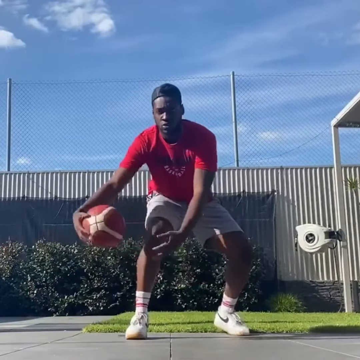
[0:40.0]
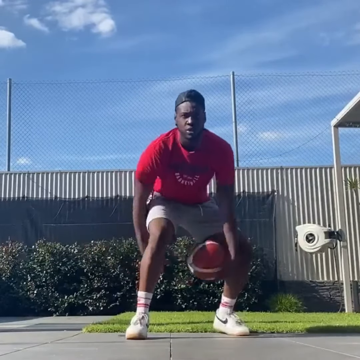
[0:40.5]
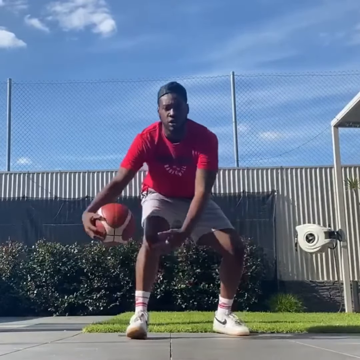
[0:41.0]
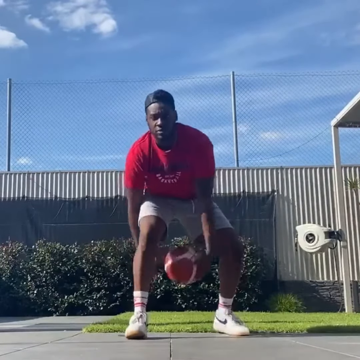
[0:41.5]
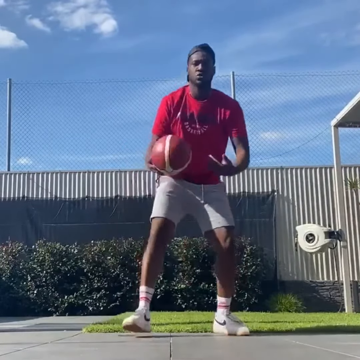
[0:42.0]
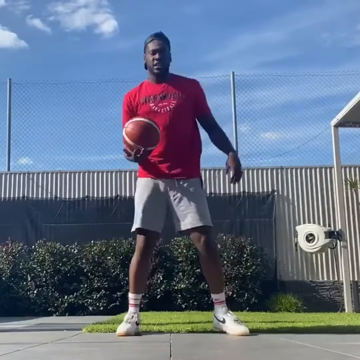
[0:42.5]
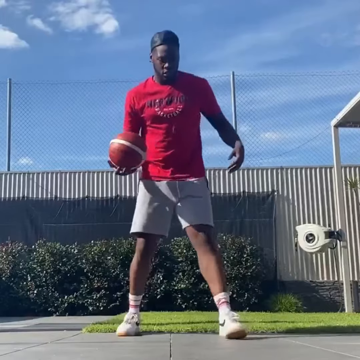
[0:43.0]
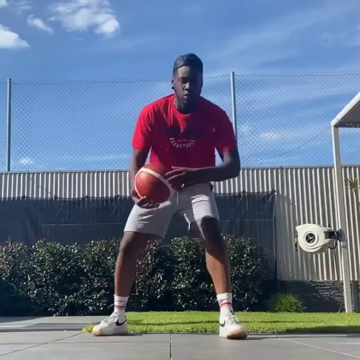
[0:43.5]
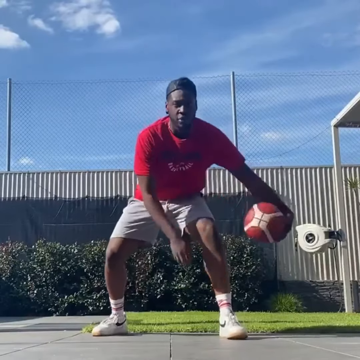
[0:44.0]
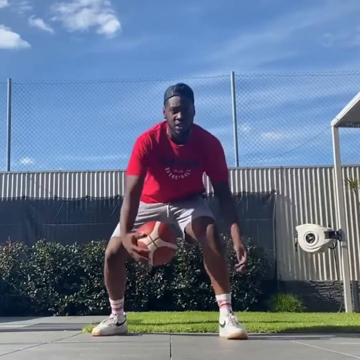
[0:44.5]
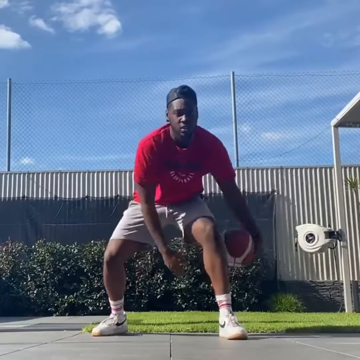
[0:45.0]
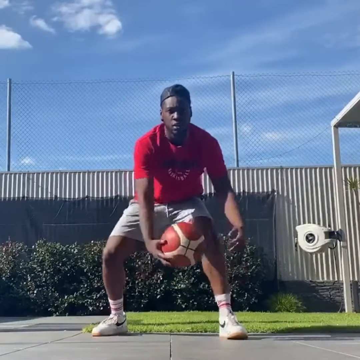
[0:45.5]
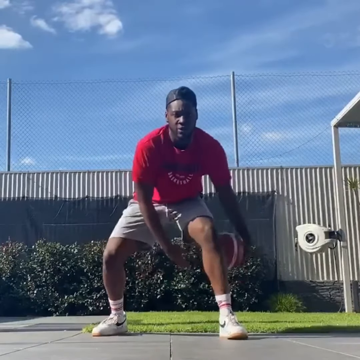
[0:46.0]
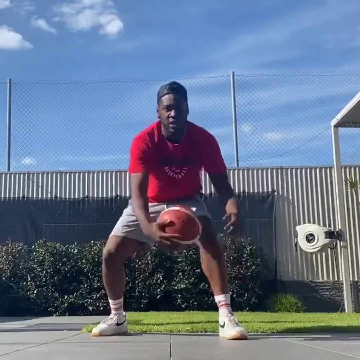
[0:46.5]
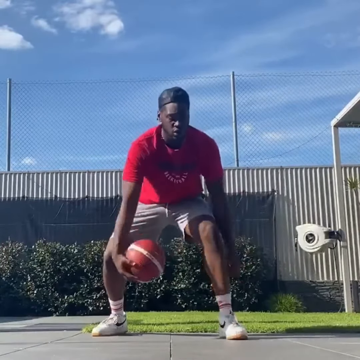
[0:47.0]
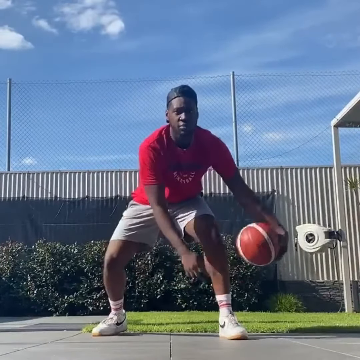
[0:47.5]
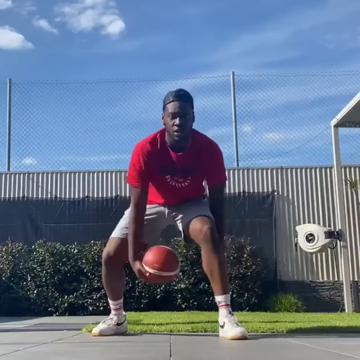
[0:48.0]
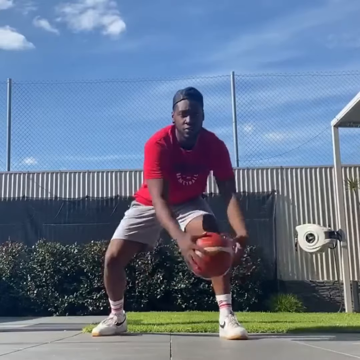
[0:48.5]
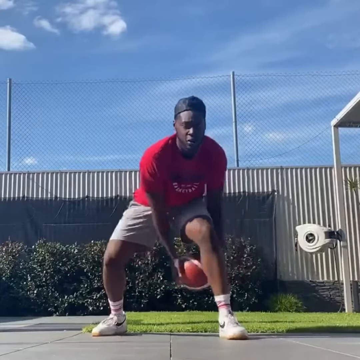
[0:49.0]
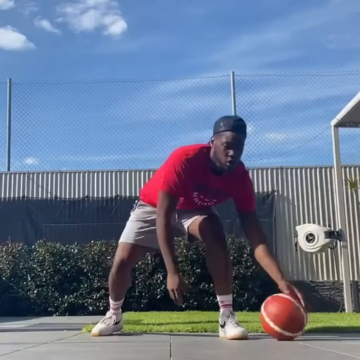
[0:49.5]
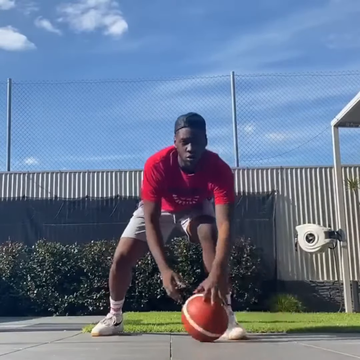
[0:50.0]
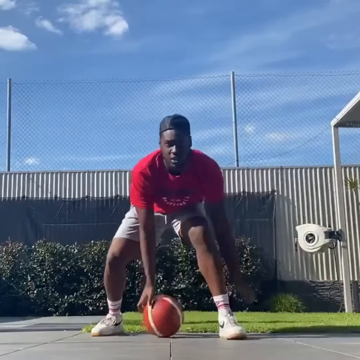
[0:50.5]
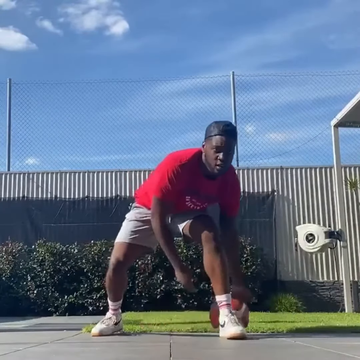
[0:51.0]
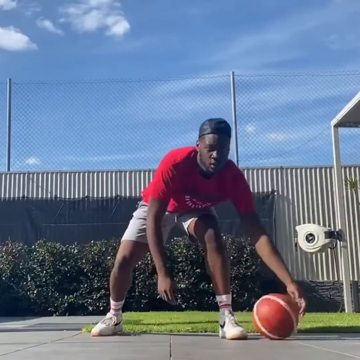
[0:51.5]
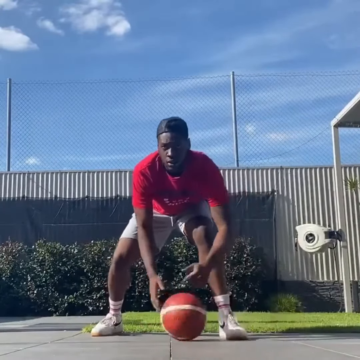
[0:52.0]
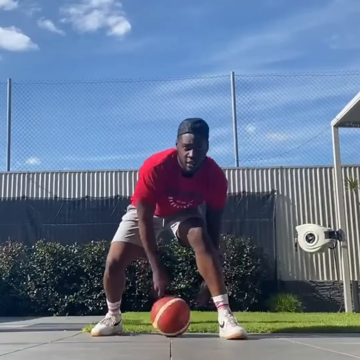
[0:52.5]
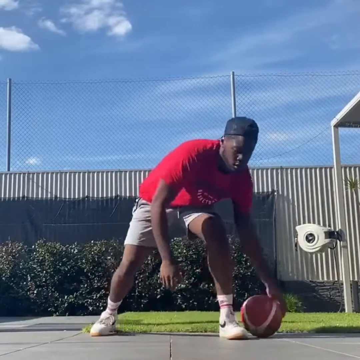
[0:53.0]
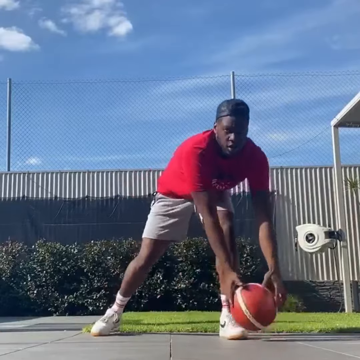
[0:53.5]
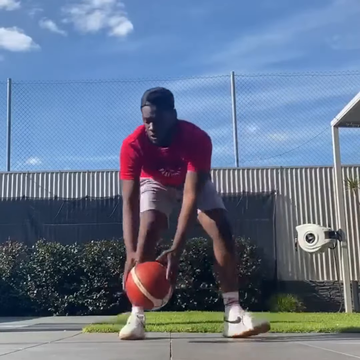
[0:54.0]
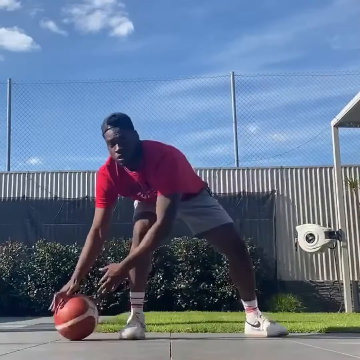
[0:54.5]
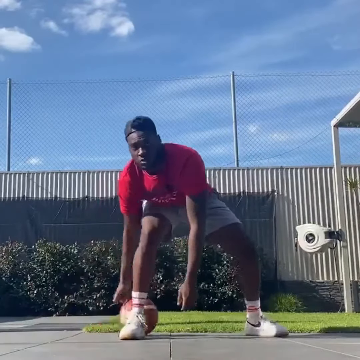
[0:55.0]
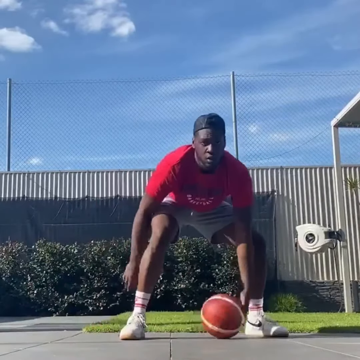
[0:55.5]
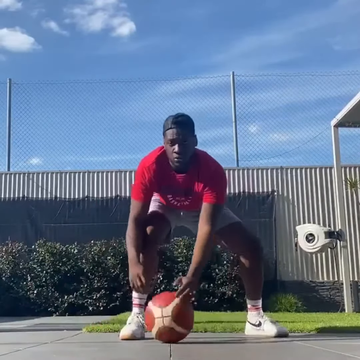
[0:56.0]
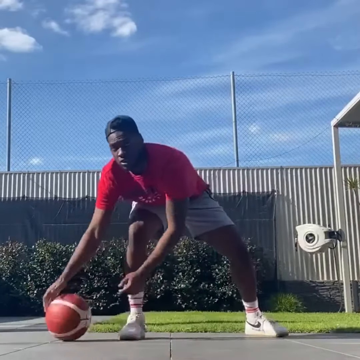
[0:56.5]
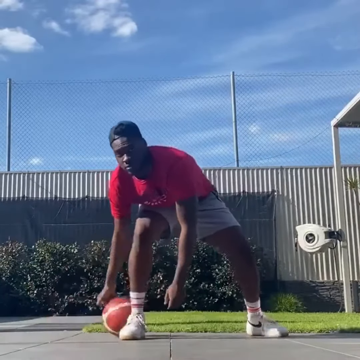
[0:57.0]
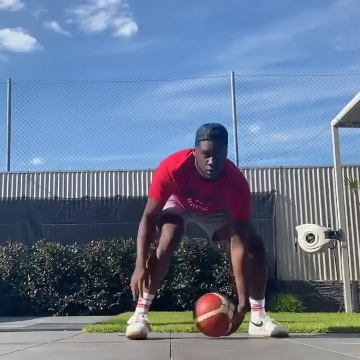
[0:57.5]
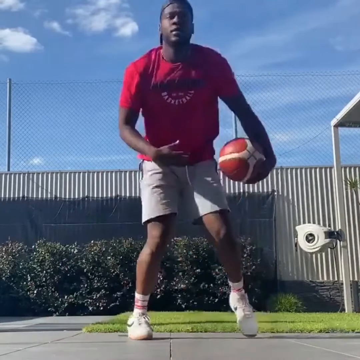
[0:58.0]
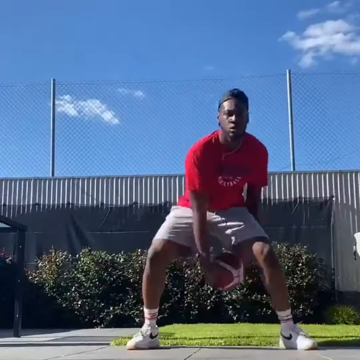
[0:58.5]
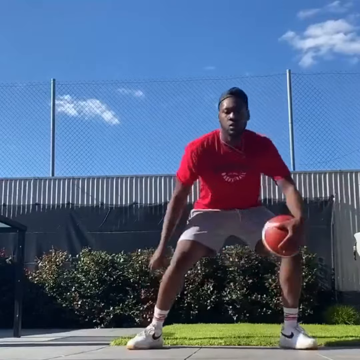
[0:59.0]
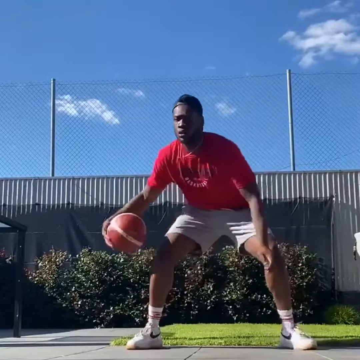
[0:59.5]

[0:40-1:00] The instructor now passes the basketball between his legs without dribbling it, using only his hands, going from his right hand to his left hand, coming up through the front and out the back, then from the back to the front. Later he places the ball on the ground and rolls it between his legs in the same motion he would use to dribble it, still not dribbling. He switches from his left leg to his right leg so he works around each leg.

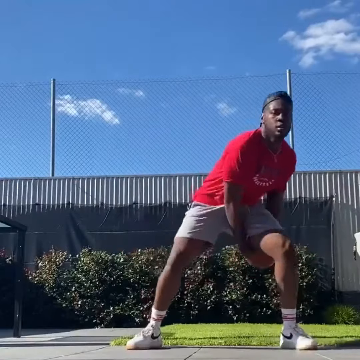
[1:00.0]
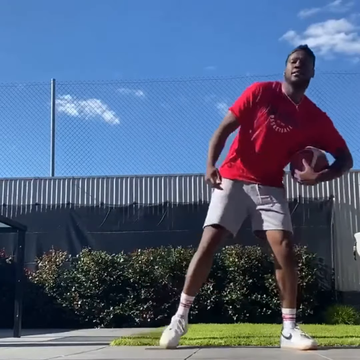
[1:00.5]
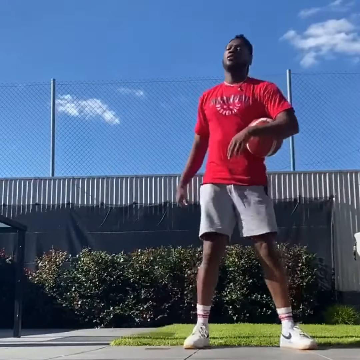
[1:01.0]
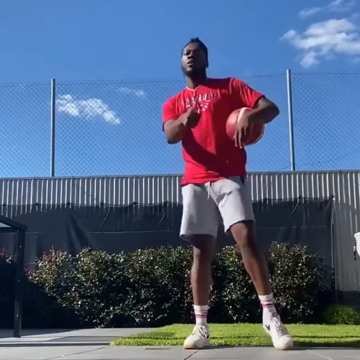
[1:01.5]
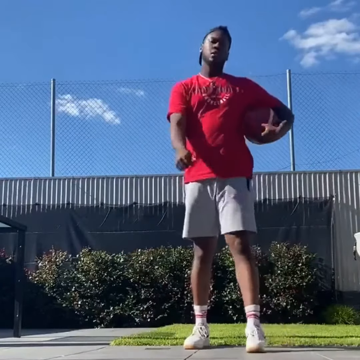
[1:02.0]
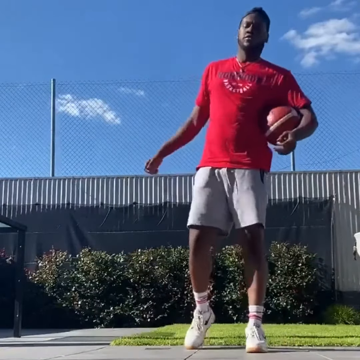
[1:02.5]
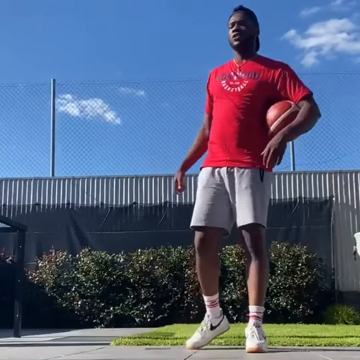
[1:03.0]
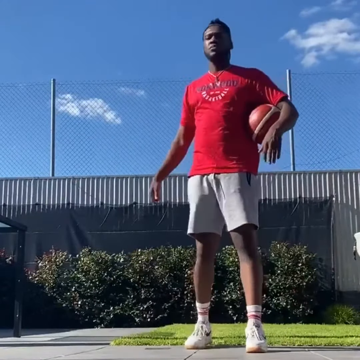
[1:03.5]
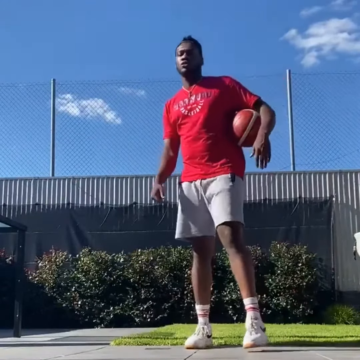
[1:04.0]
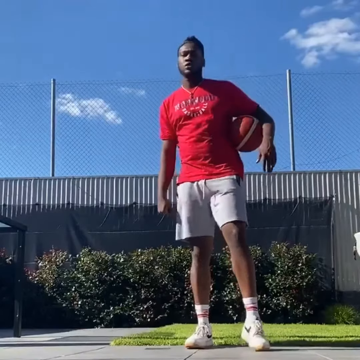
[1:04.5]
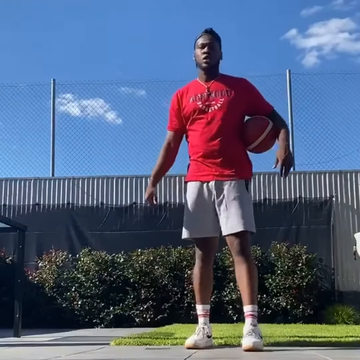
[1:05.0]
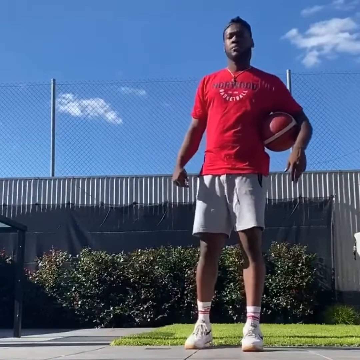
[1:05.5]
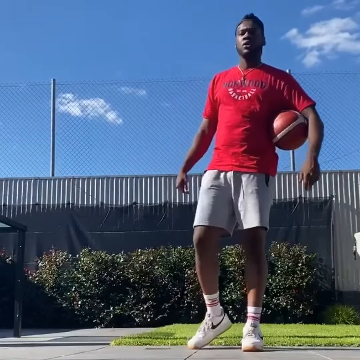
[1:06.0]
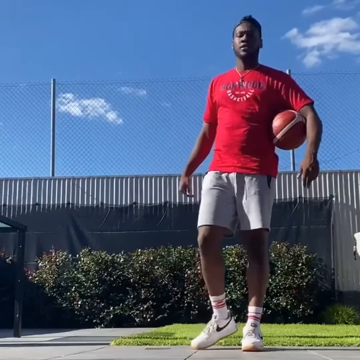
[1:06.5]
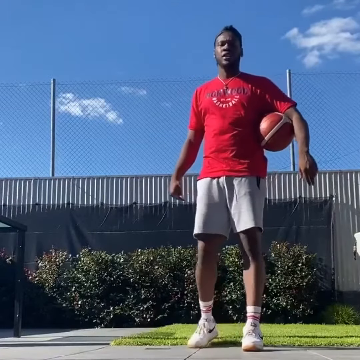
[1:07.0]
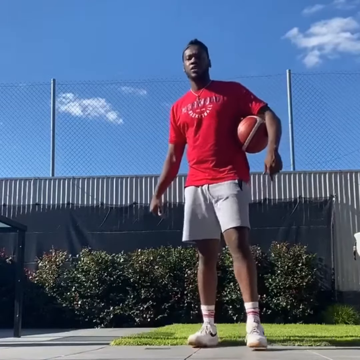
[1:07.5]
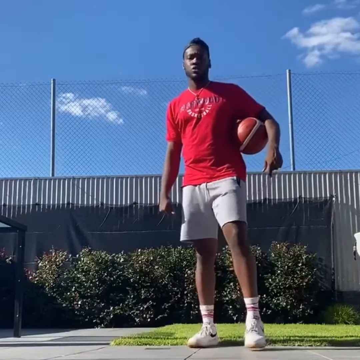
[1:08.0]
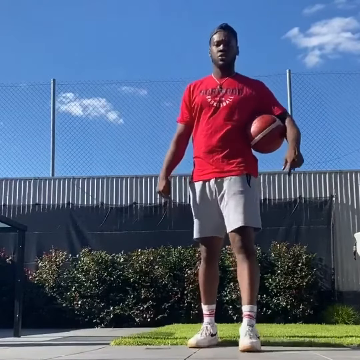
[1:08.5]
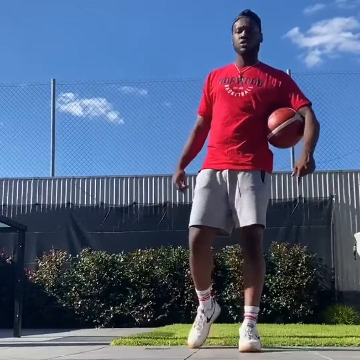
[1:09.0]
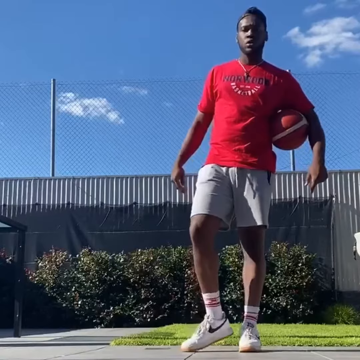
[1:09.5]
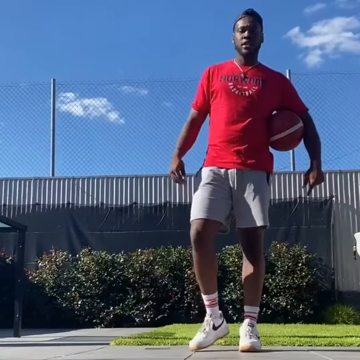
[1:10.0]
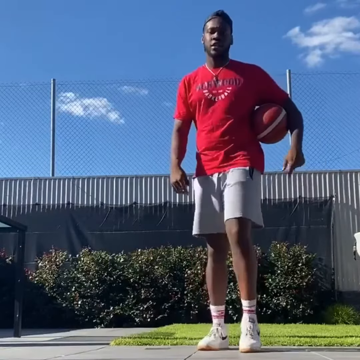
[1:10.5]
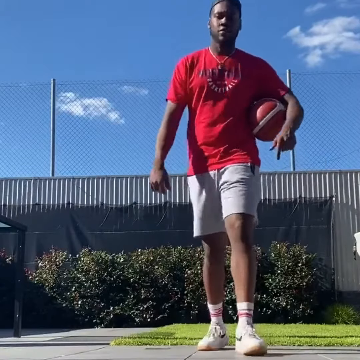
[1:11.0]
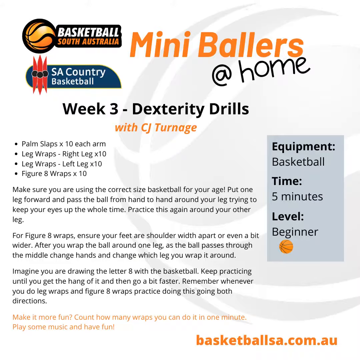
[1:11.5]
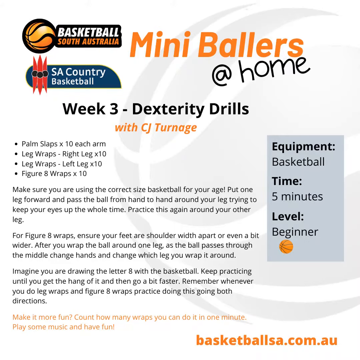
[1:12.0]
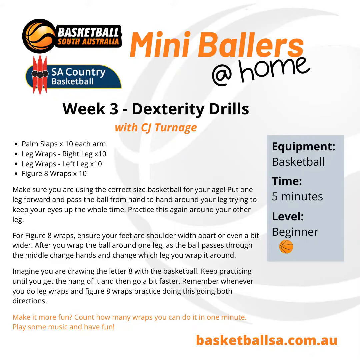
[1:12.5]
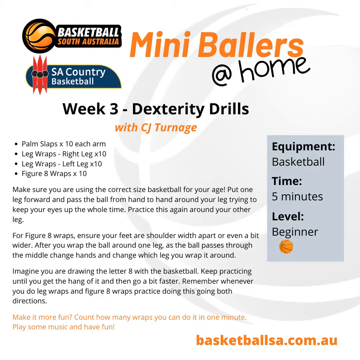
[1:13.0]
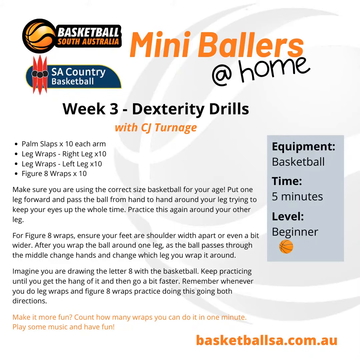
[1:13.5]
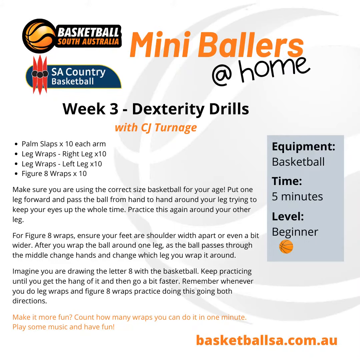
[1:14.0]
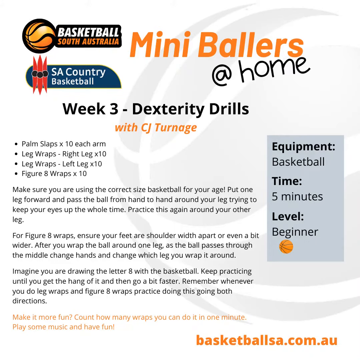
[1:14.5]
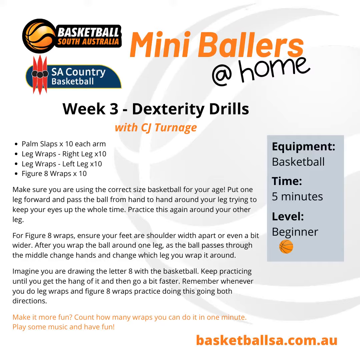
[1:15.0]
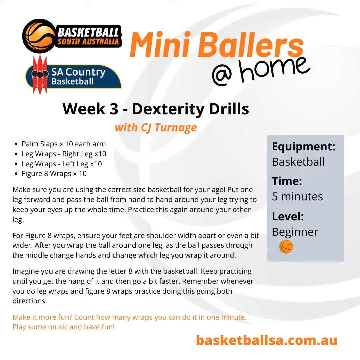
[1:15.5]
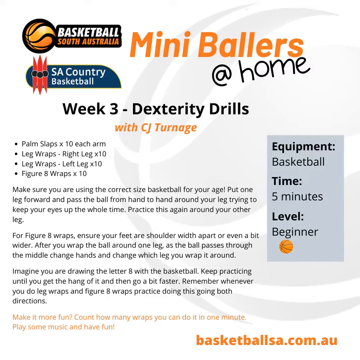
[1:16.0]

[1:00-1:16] The instructor picks up the ball and passes it from one hand to the other between his legs without letting it touch the ground, demonstrating the transition. He then puts the ball underneath his right arm and gives a thumbs up to the camera. The video then shows the mini ballers, apparently his team, with the schedule of an upcoming game: the mini ballers at home at Basketball South Australia, week three, facing the SA Country Basketball team. Instruction text follows, reading "make sure you're using correct ball size for your age. Put one leg forward, pass the ball from one hand around your leg, trying to keep your eyes up the whole time. Practice this again and again around your other leg. For figure eight wraps, it's the same thing. Ensure your feet are shoulder width apart. After you wrap the ball around one leg, pass the ball".